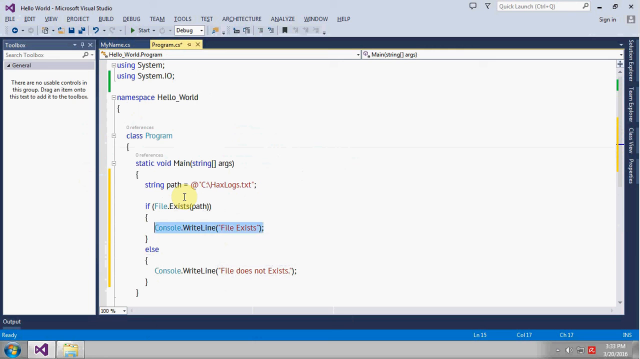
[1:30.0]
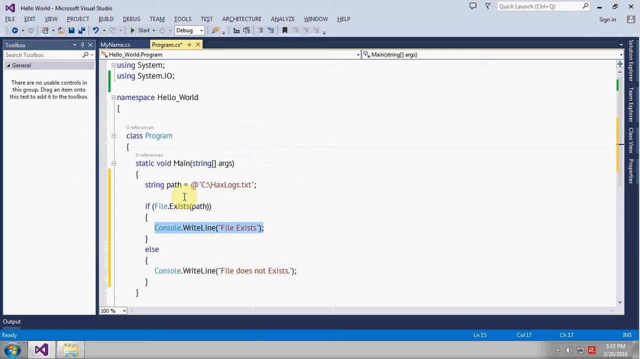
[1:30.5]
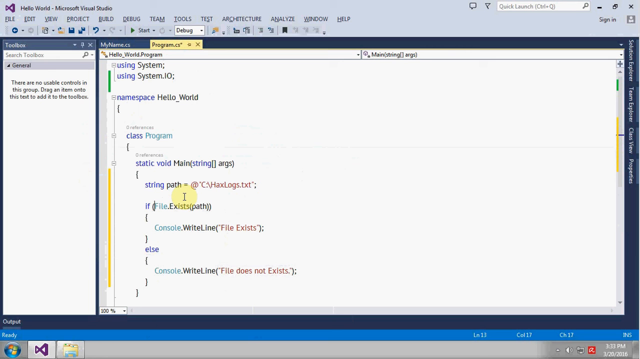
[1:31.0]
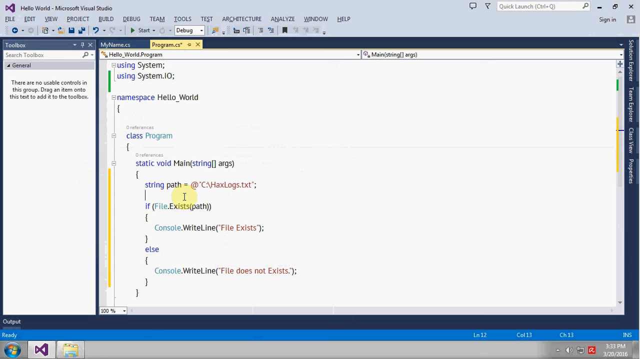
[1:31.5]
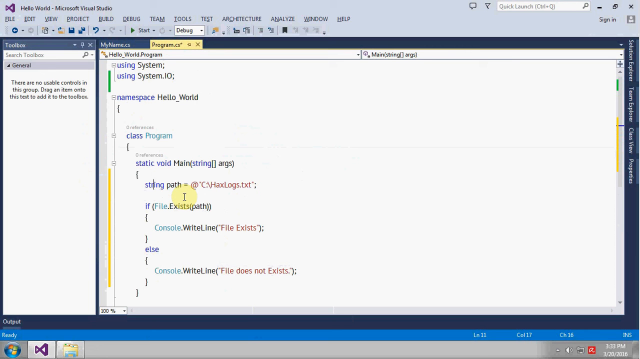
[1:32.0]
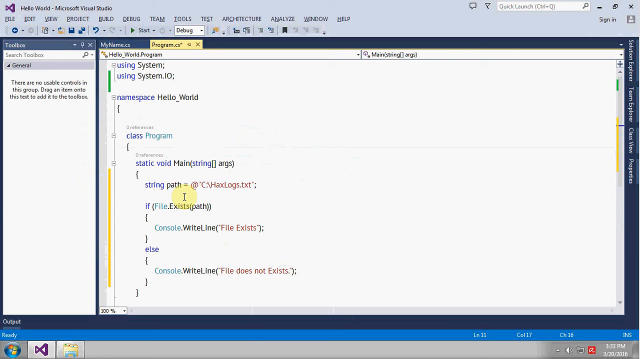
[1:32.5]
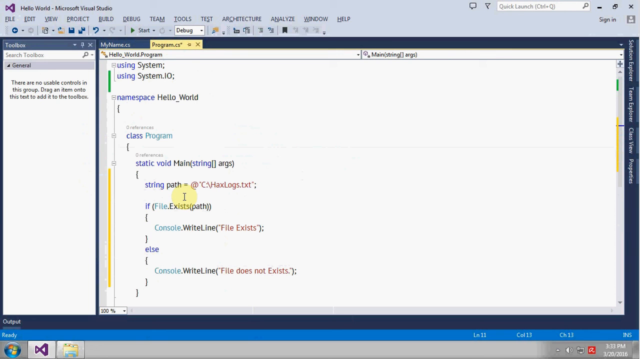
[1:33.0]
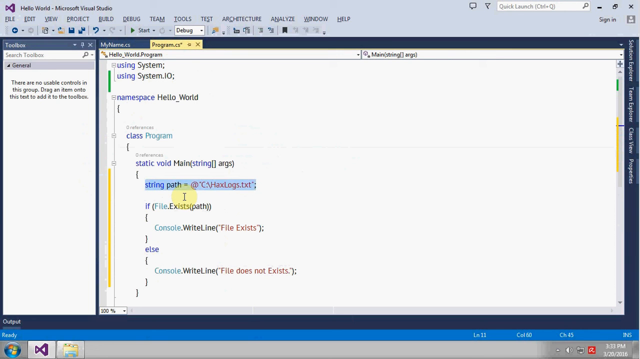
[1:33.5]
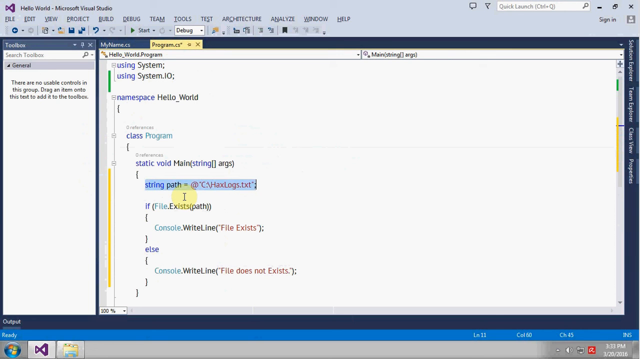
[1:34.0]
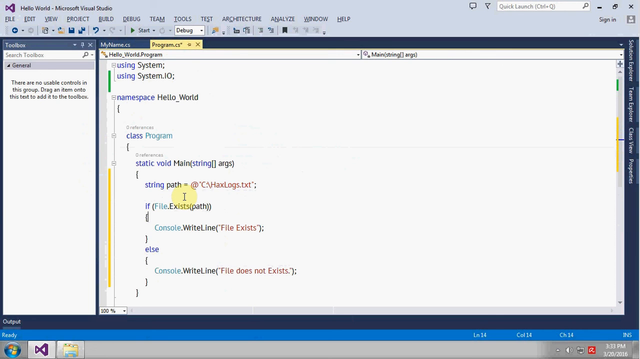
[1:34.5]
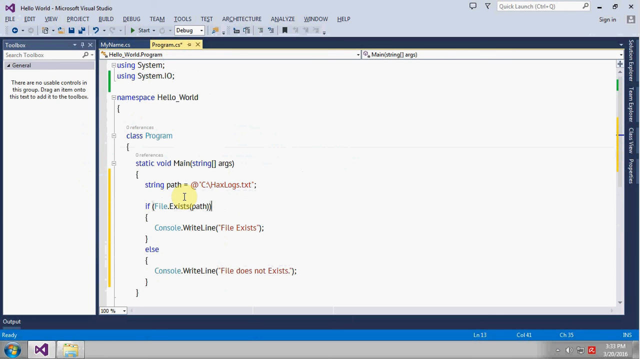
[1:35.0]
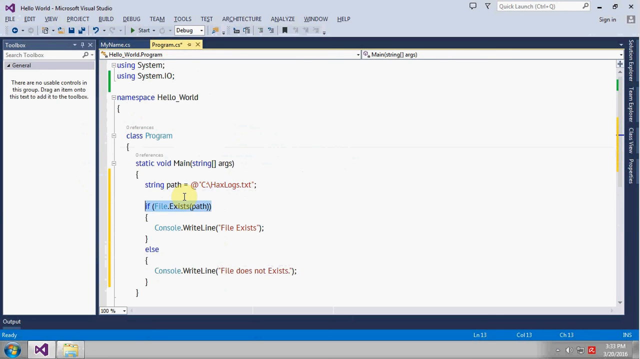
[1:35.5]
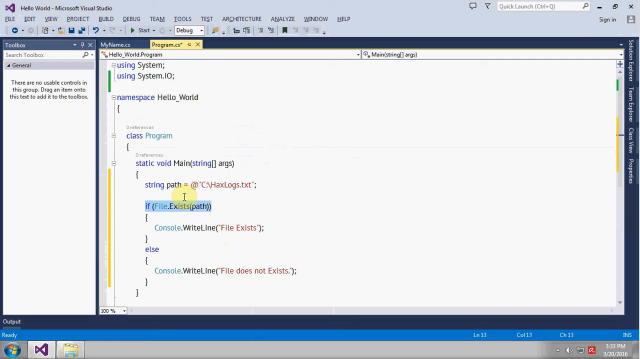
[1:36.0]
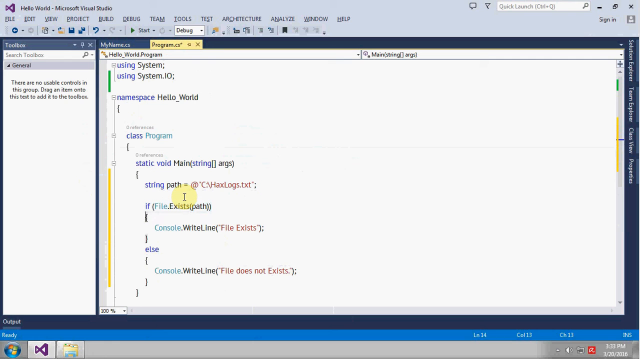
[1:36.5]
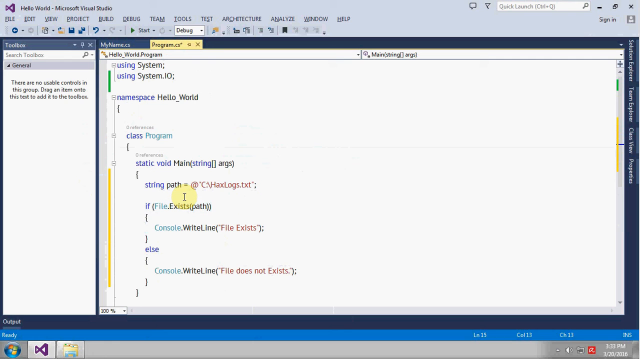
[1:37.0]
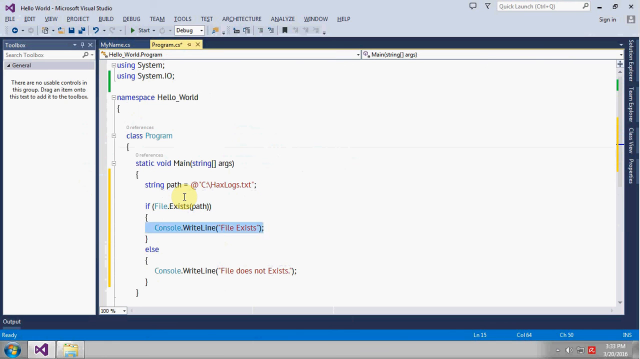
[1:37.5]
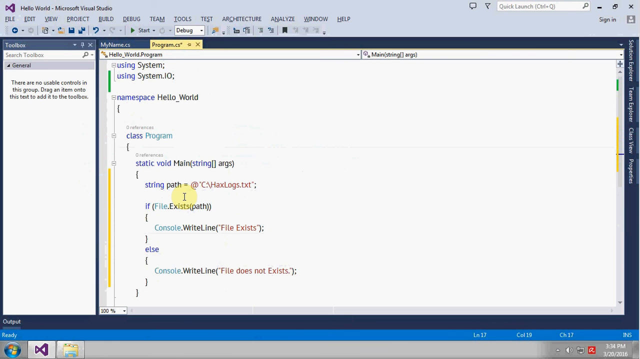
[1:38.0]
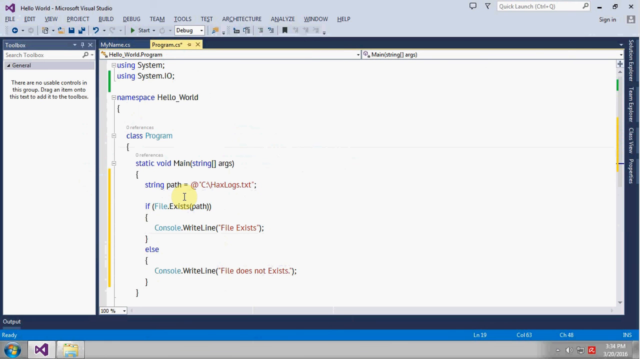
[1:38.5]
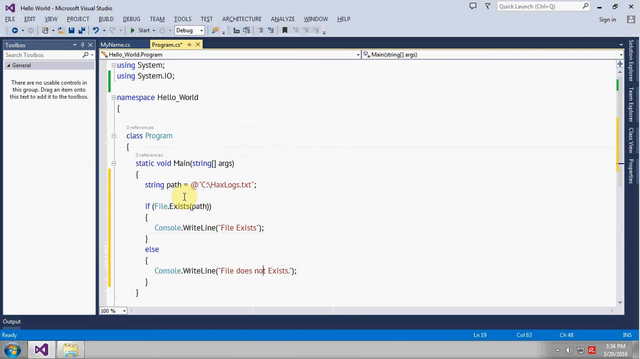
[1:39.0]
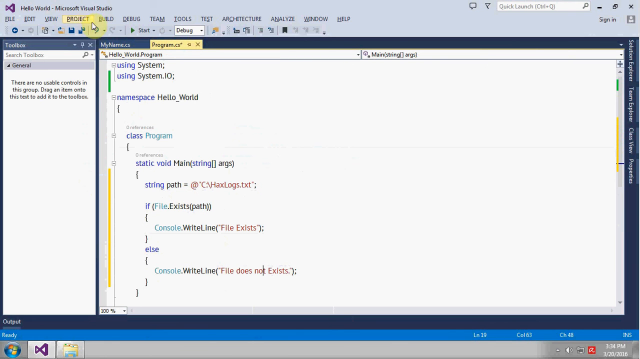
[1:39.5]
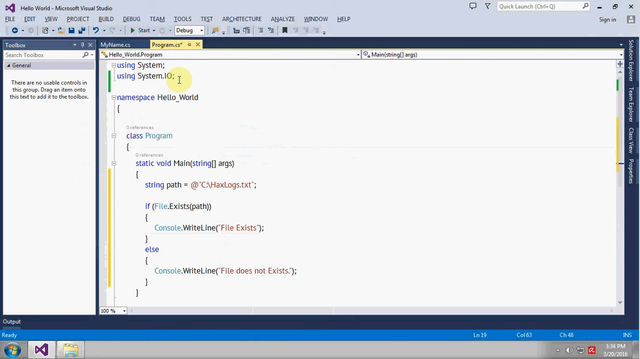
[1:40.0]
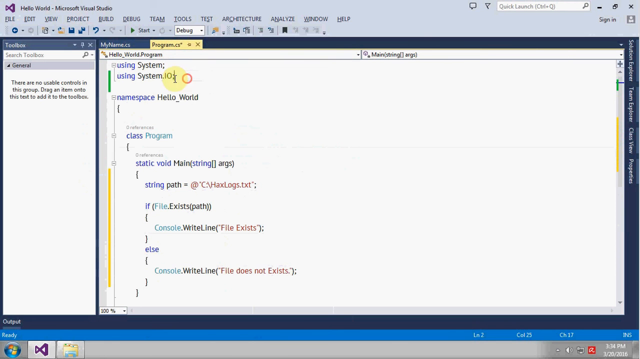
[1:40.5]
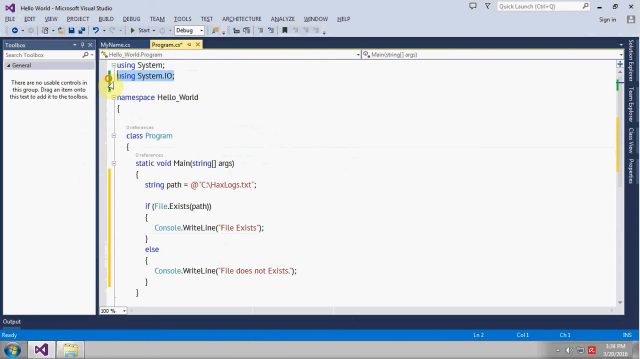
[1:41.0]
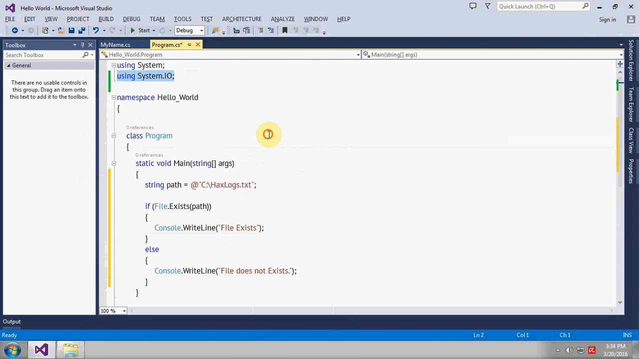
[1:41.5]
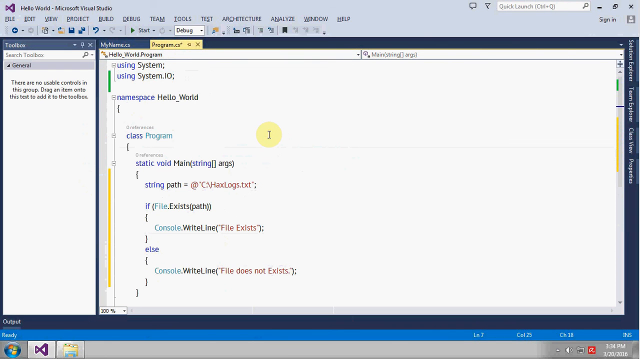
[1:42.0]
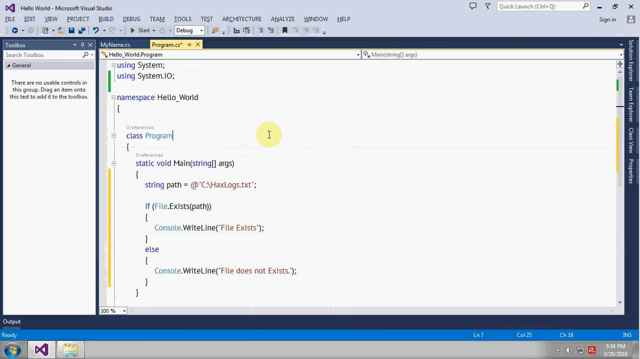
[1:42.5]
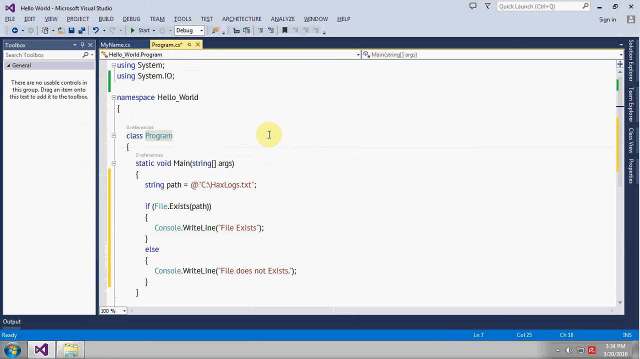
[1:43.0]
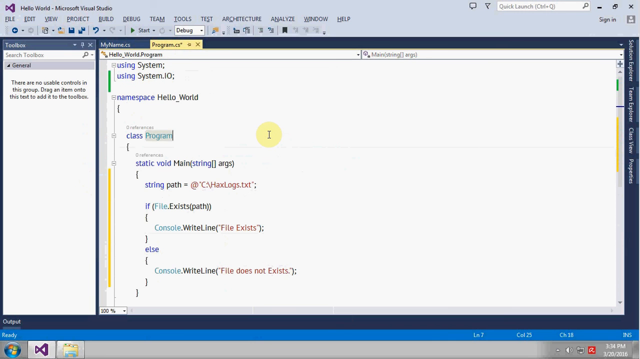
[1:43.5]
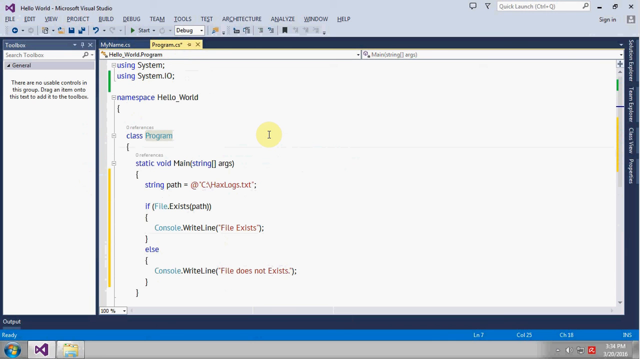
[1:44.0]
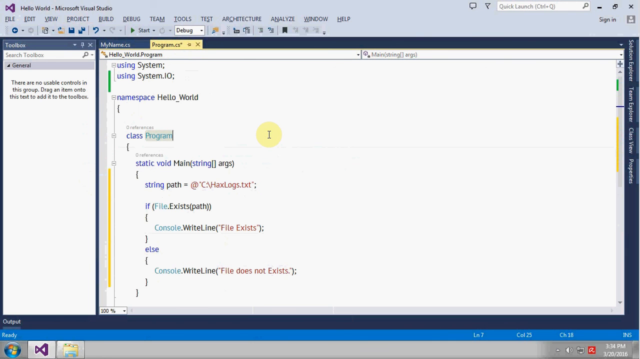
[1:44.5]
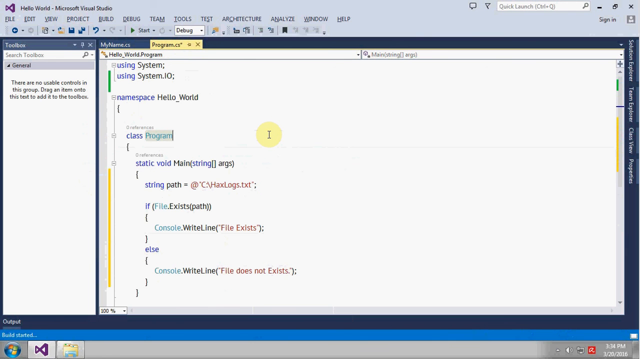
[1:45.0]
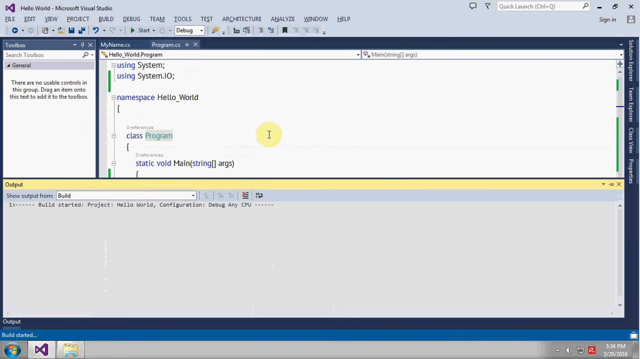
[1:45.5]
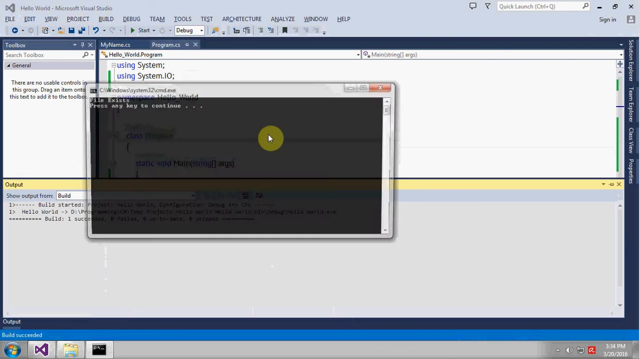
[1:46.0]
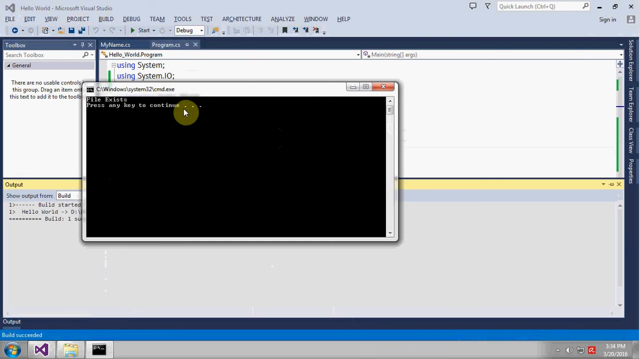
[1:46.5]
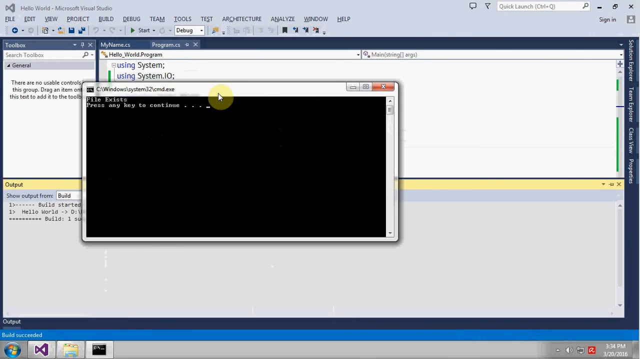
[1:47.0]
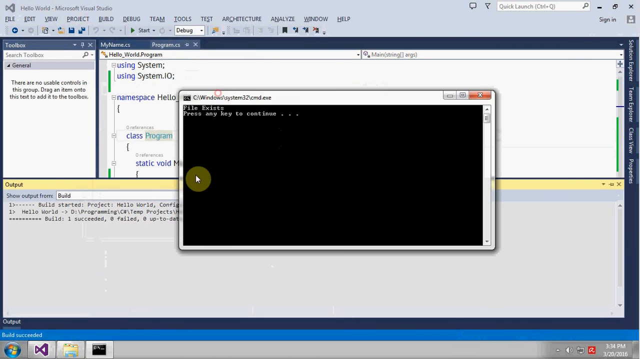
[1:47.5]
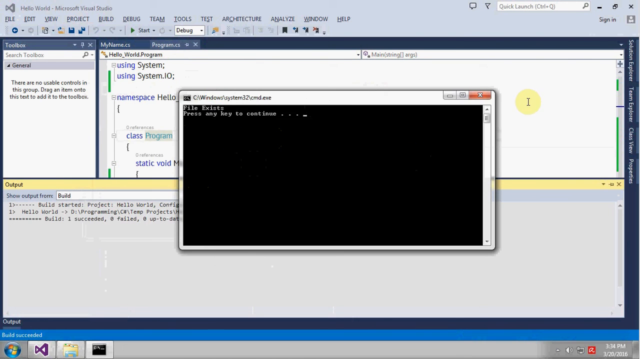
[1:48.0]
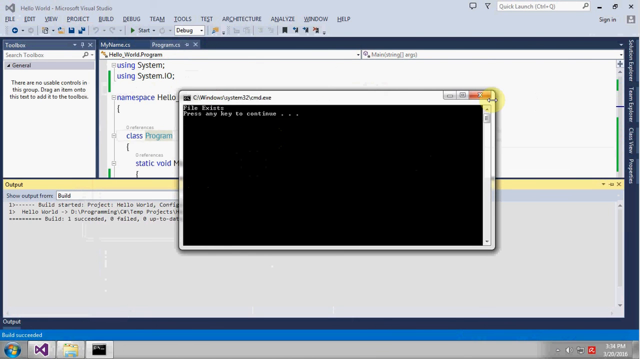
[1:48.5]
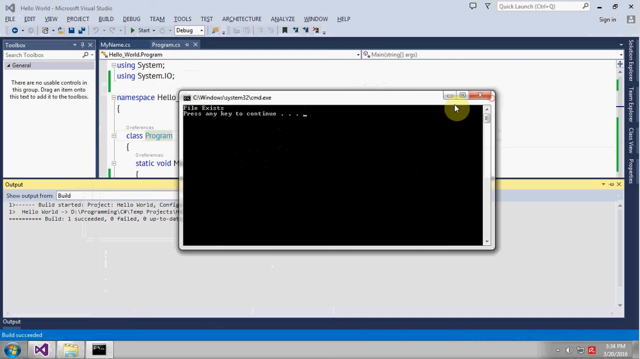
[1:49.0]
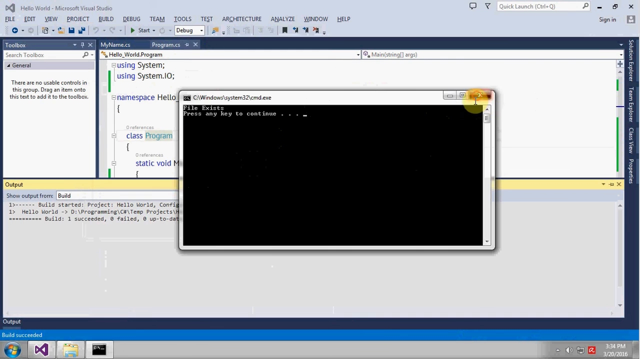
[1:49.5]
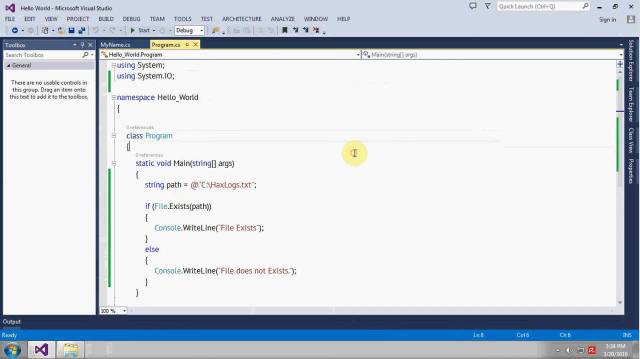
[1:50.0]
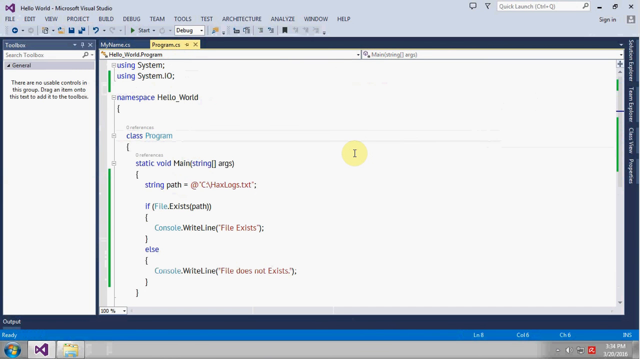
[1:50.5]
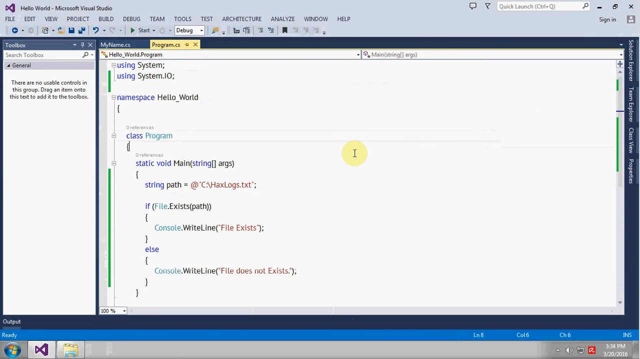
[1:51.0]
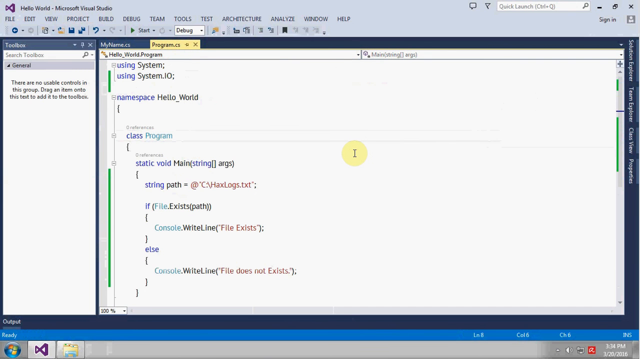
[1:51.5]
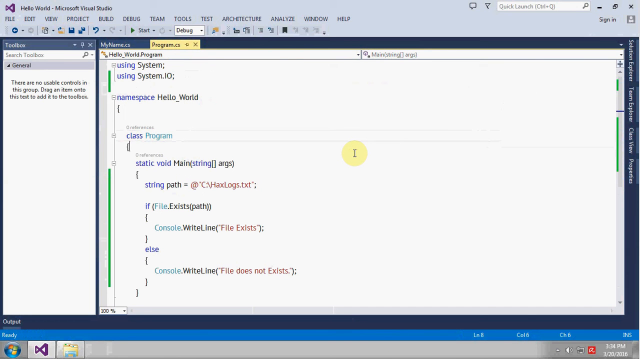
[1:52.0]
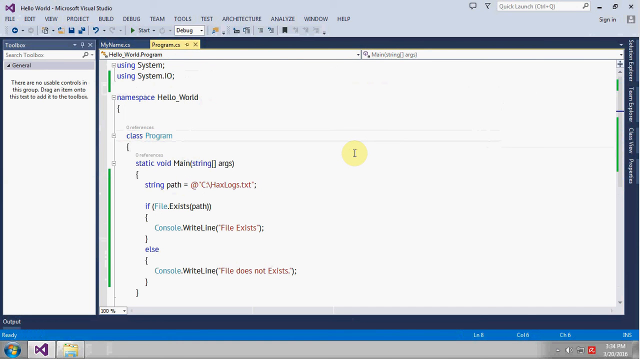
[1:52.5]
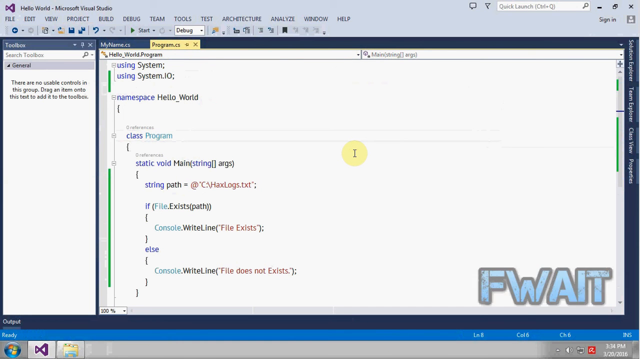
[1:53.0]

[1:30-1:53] In the Hello World file in Microsoft Visual Studio, the cursor moves around the screen, seemingly checking for formatting errors and confirming that every line has been entered correctly. A test of the script running is then shown, and it shows that the file exists. The lines of code are then highlighted.